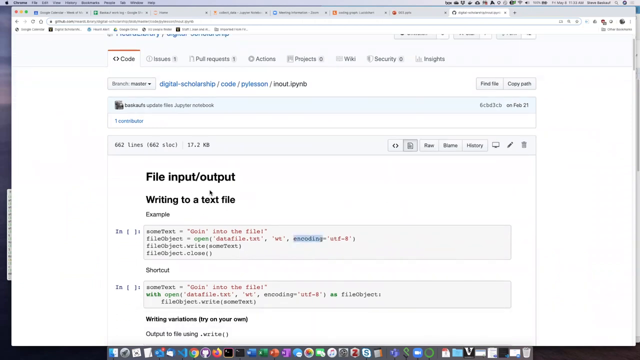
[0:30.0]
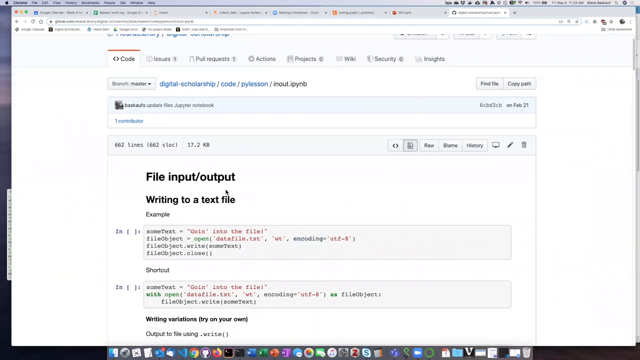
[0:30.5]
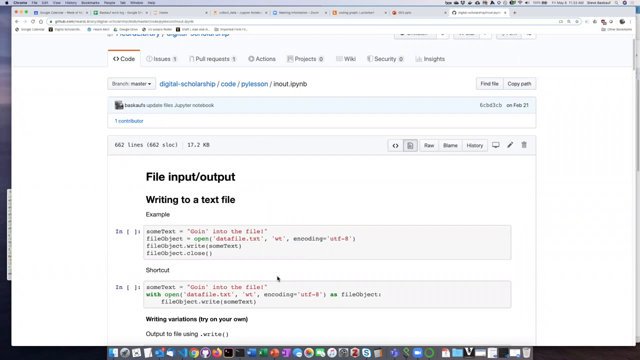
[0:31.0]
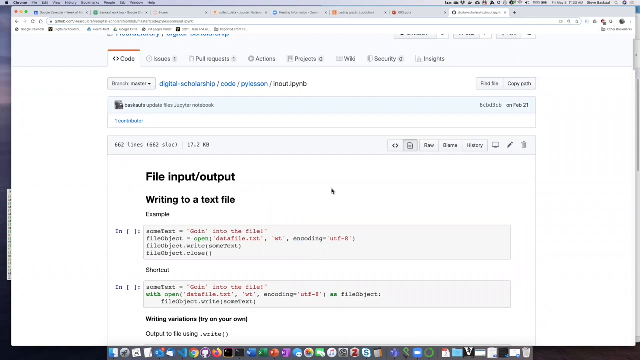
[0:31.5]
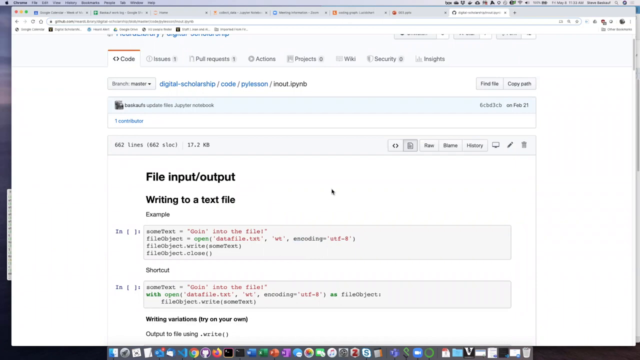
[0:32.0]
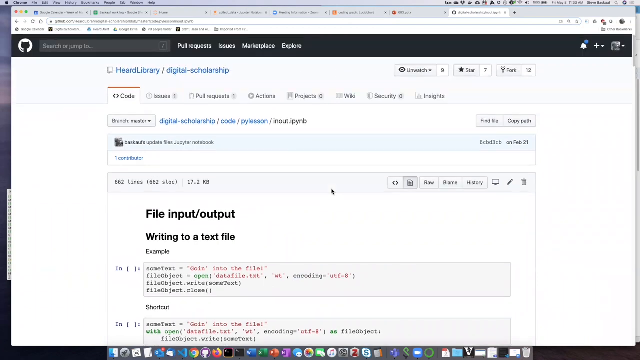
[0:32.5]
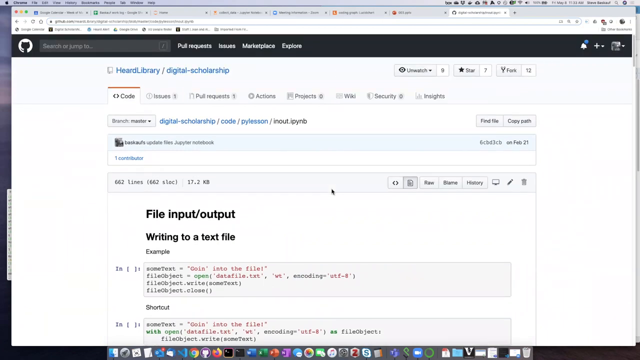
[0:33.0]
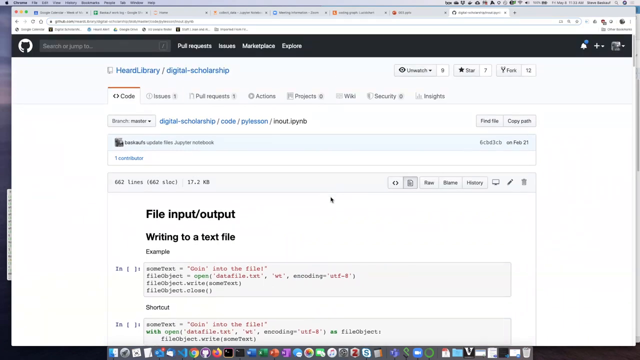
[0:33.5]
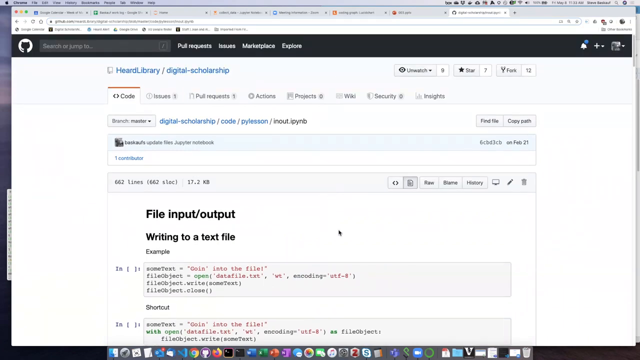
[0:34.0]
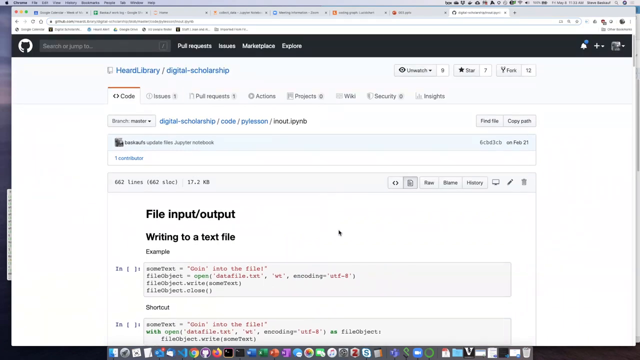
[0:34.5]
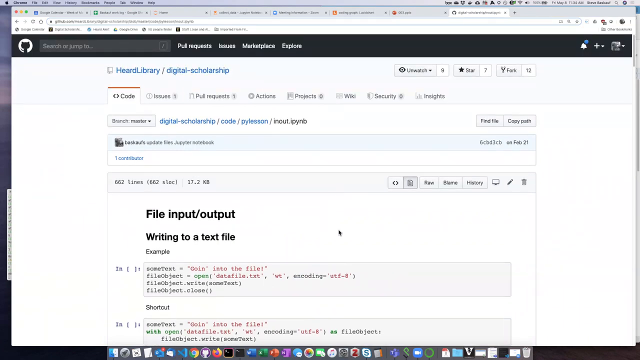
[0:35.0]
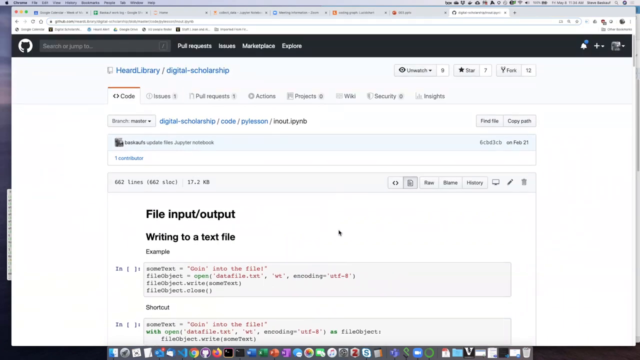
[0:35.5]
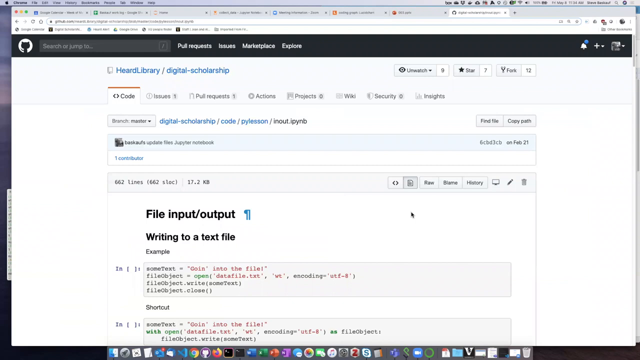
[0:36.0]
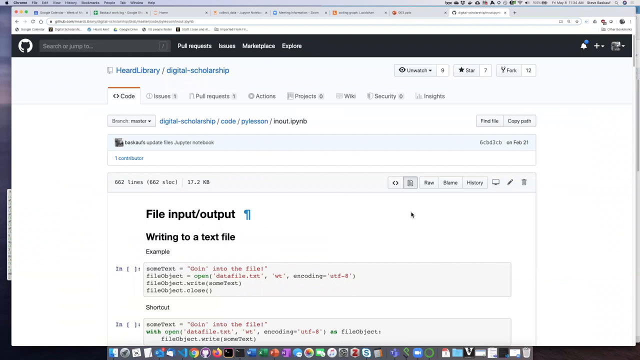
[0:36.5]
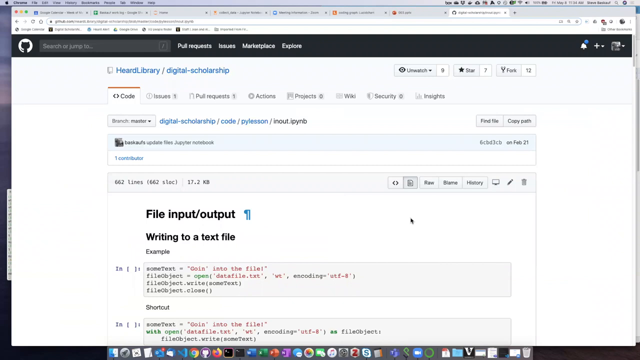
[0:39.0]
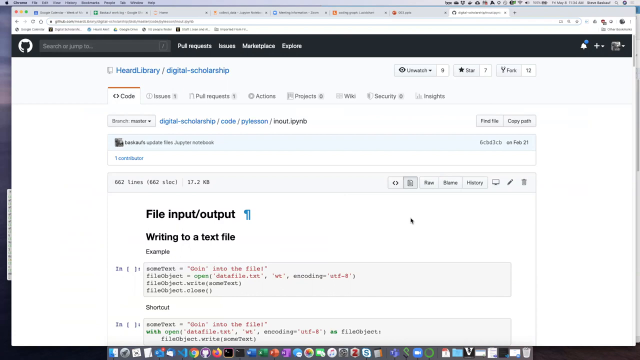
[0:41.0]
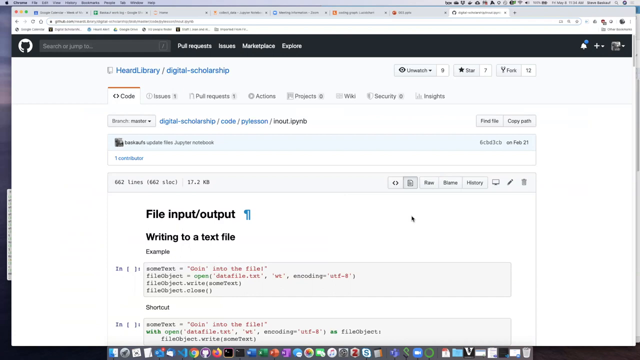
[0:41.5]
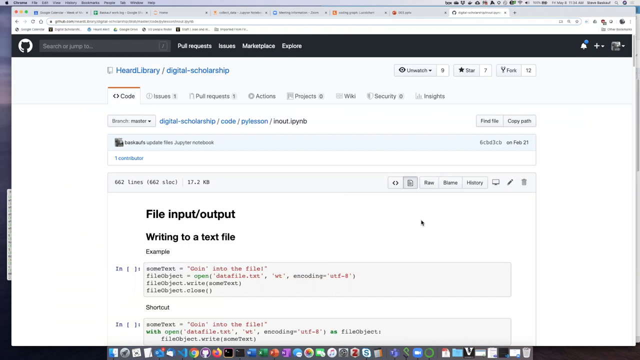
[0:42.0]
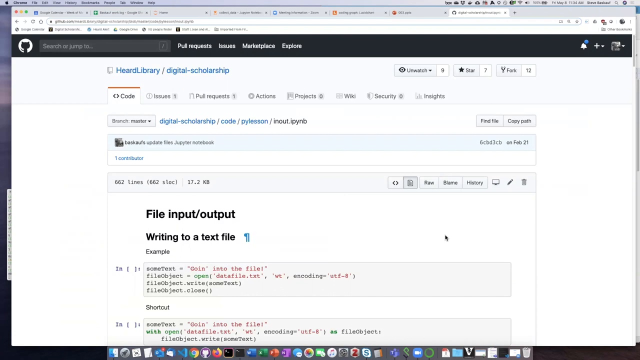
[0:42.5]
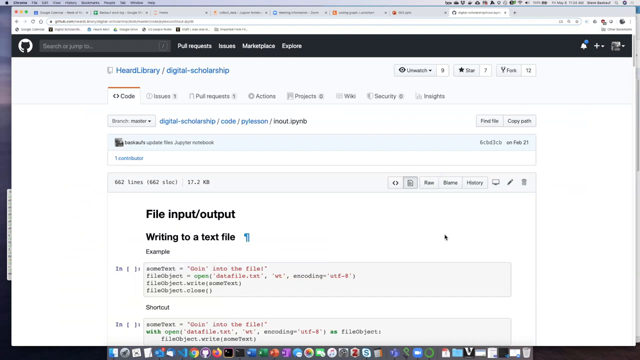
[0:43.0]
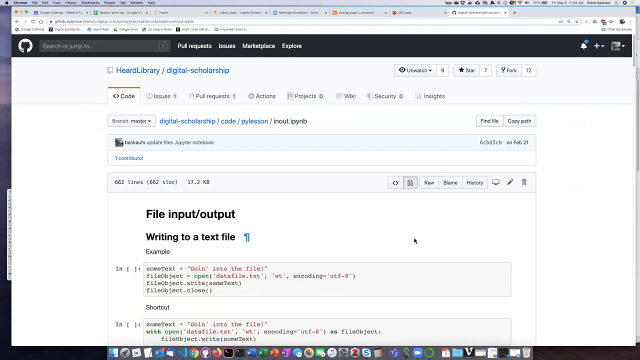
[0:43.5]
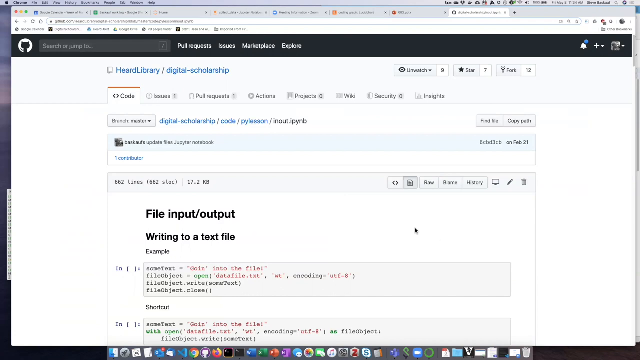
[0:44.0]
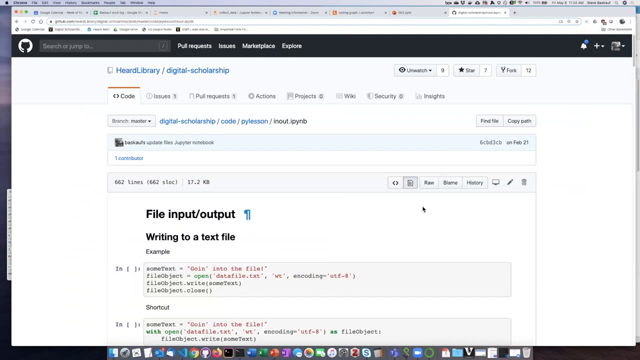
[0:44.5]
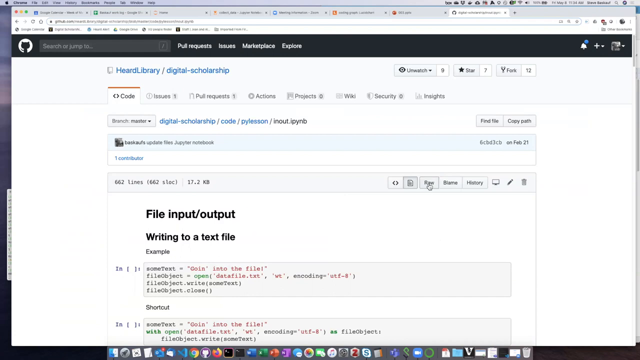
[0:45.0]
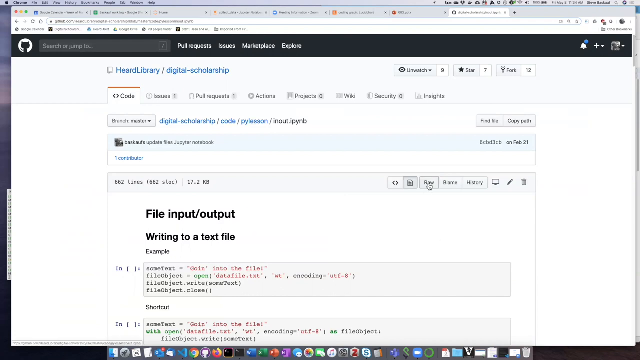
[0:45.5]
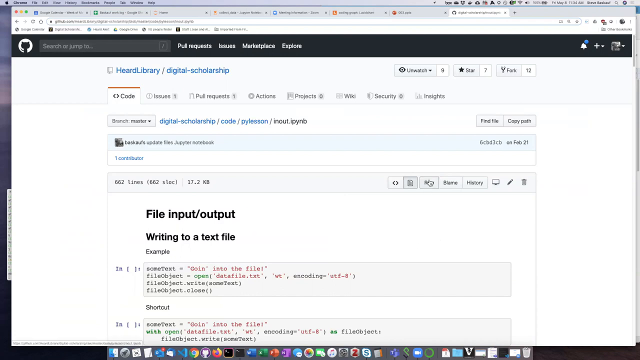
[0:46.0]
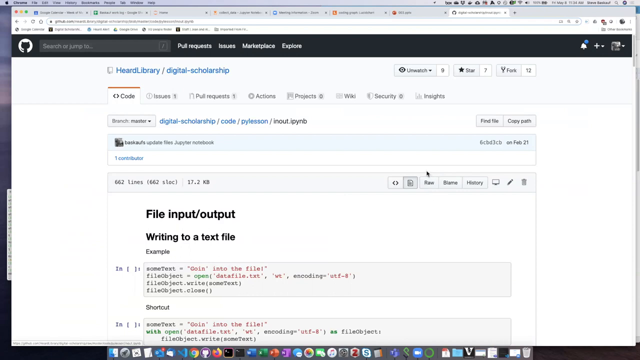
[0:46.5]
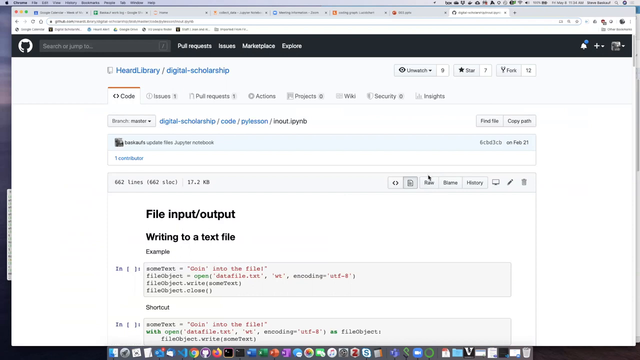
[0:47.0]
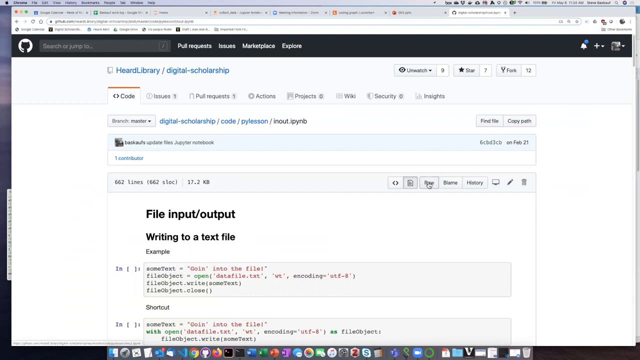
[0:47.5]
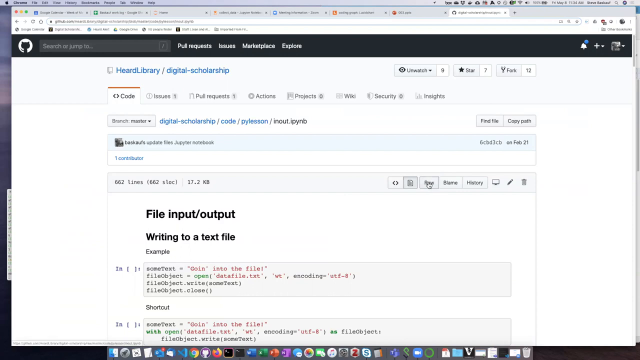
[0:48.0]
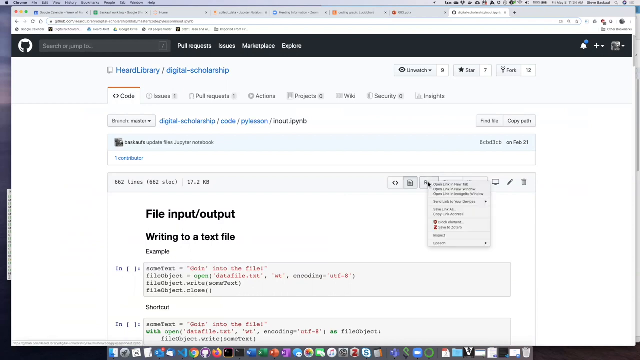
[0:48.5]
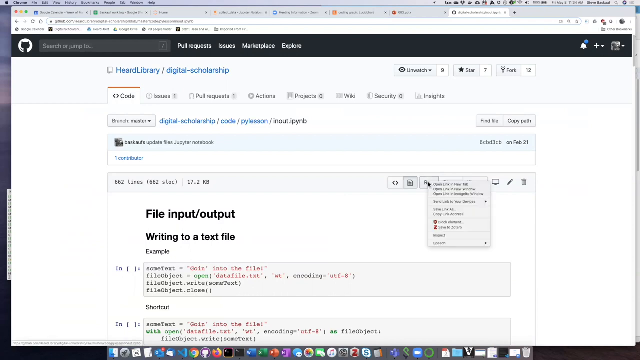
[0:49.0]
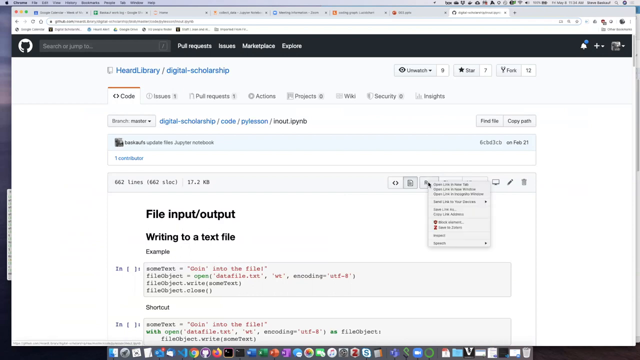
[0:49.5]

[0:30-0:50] The file input output page remains on screen. The cursor wiggles around a bit, then goes over to the right side of the page and clicks on one of the tabs, and several options drop down. Starting again from the center of the page, the cursor scrolls up and goes to a tab that apparently says "raw," a three-letter word starting with R, and clicks on it. A dropdown opens with three options, a line break, another option with an arrow pointing to the right, a break, two lines of text, a line break, two more lines of text with red icons on the left, a line break, a single line of text, a line break, and one more line of text with an arrow pointing to the right.